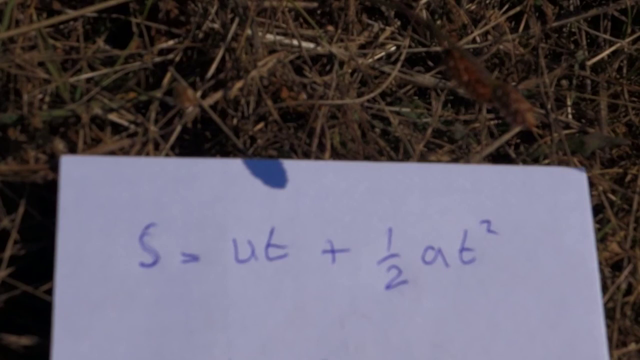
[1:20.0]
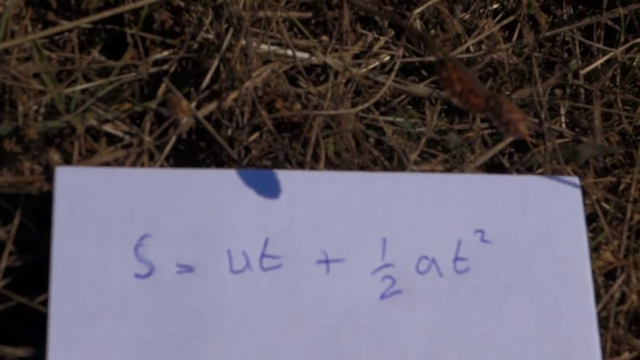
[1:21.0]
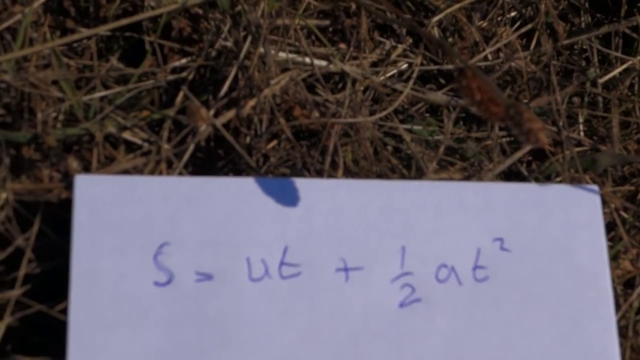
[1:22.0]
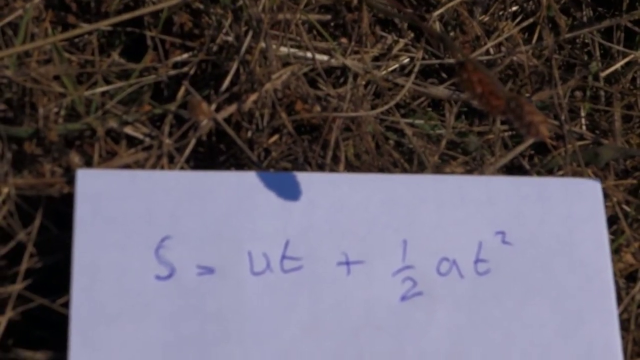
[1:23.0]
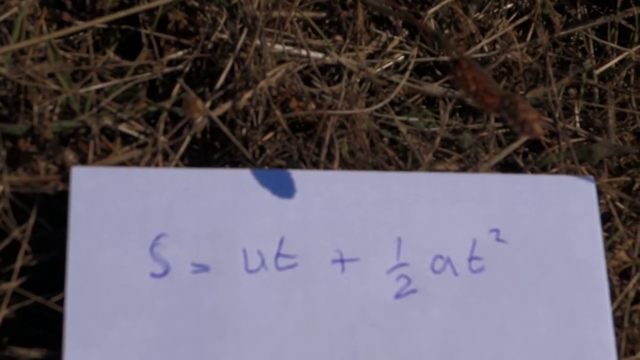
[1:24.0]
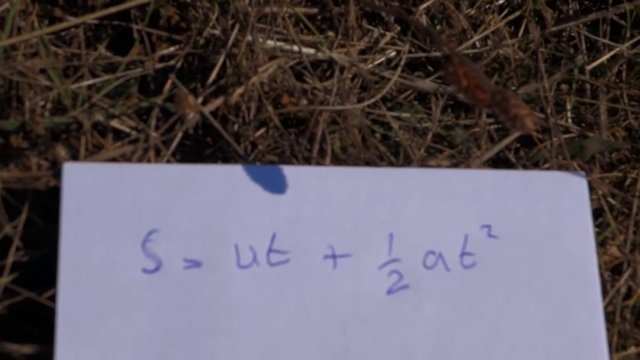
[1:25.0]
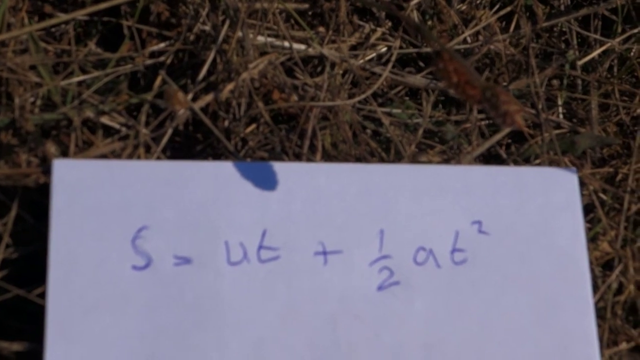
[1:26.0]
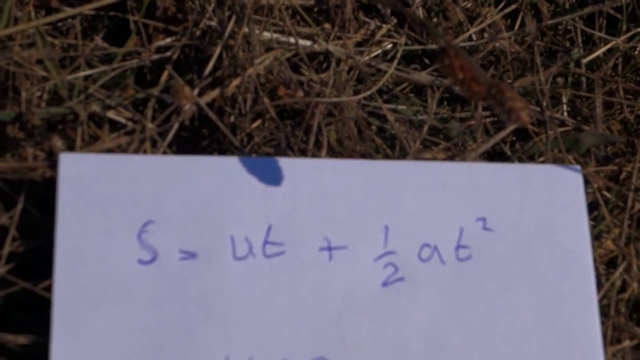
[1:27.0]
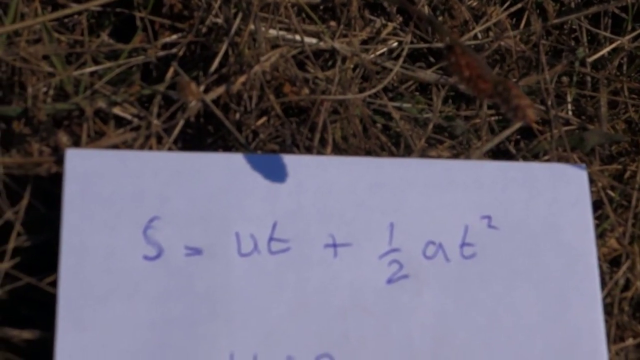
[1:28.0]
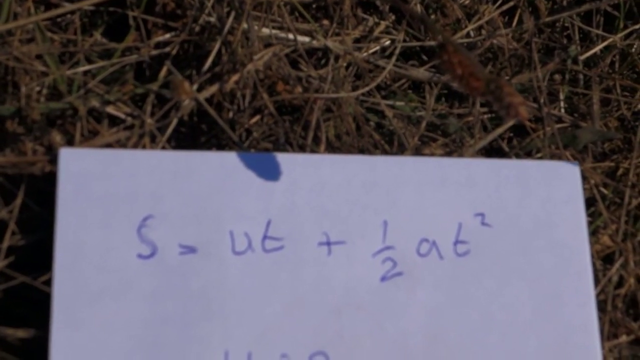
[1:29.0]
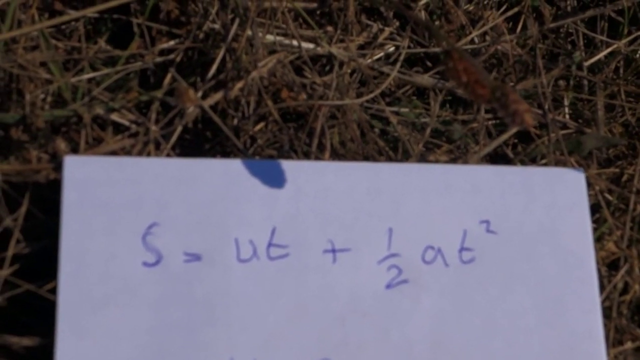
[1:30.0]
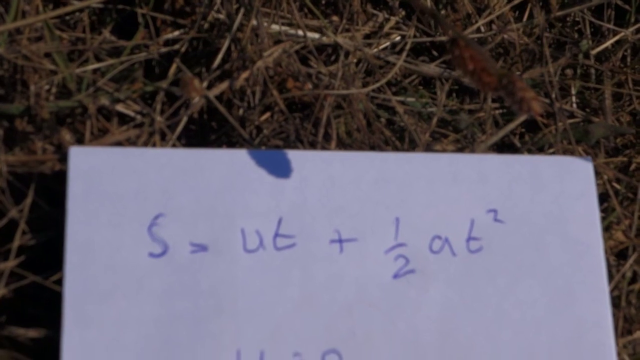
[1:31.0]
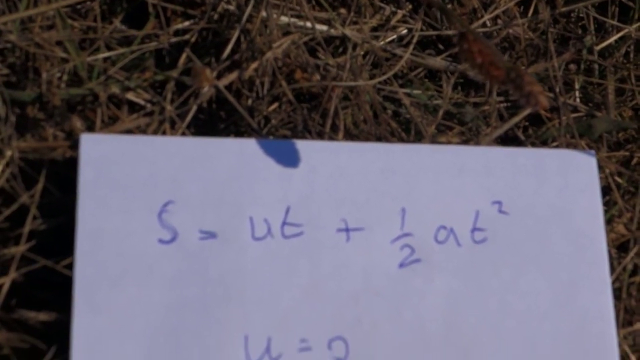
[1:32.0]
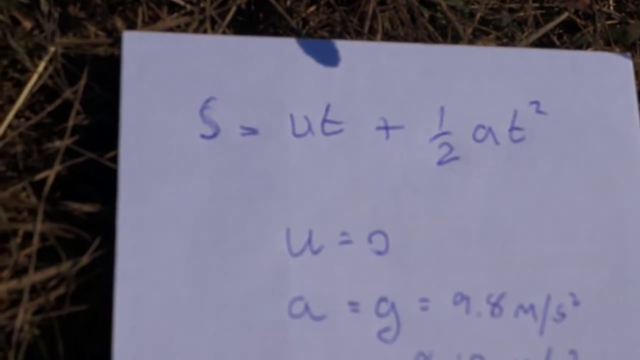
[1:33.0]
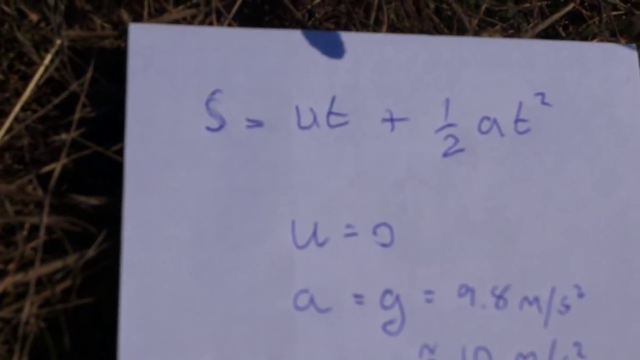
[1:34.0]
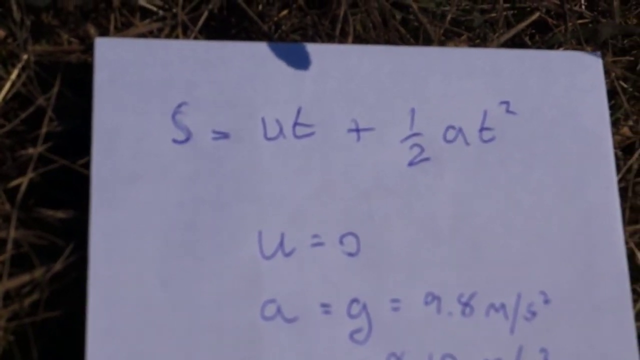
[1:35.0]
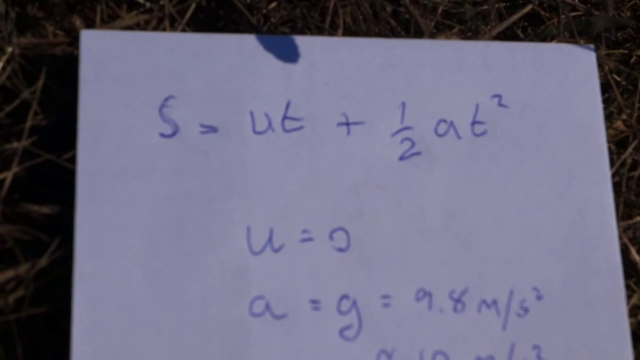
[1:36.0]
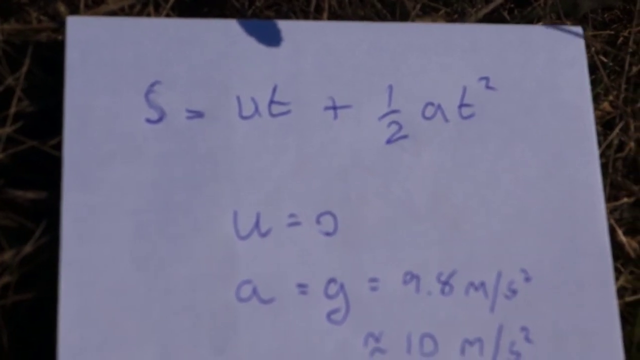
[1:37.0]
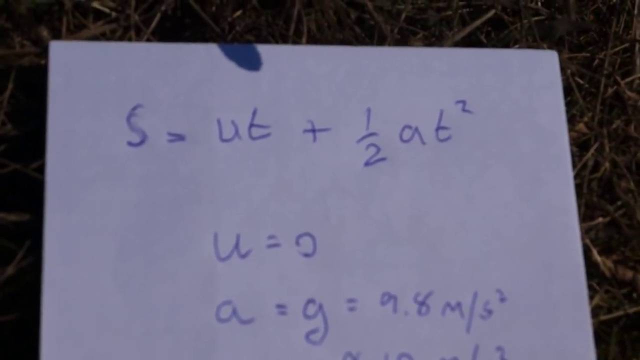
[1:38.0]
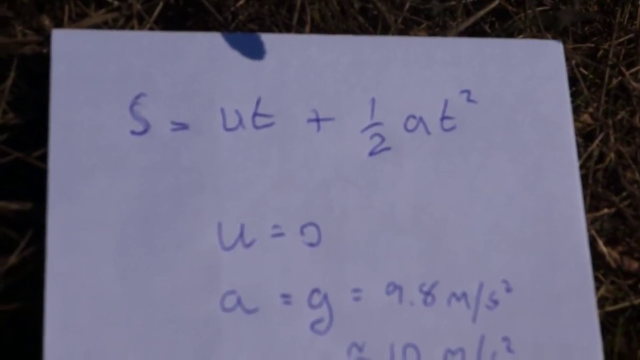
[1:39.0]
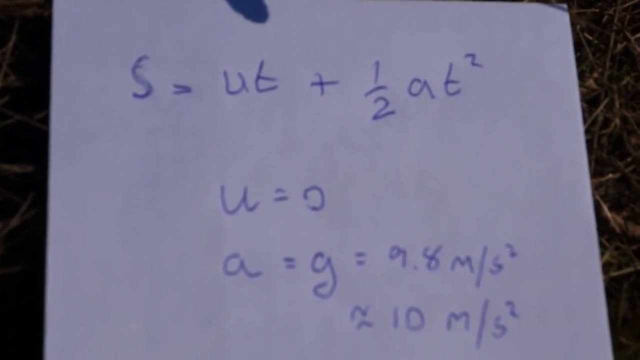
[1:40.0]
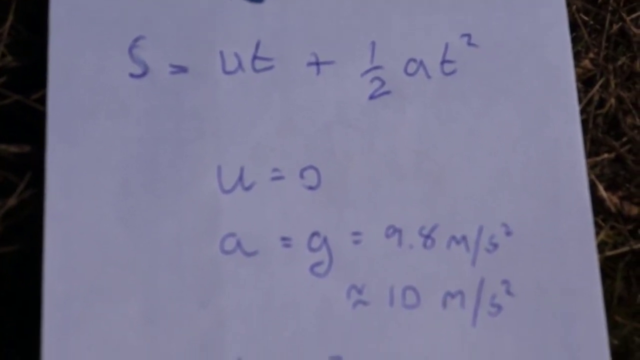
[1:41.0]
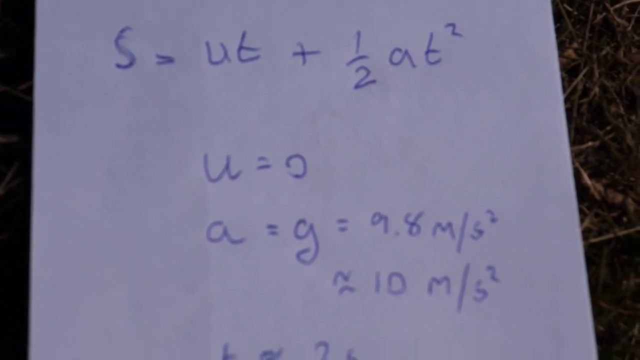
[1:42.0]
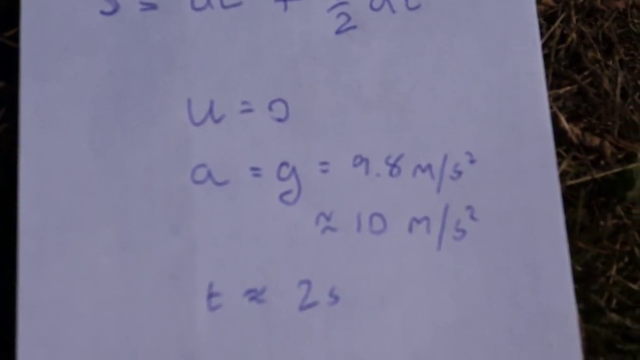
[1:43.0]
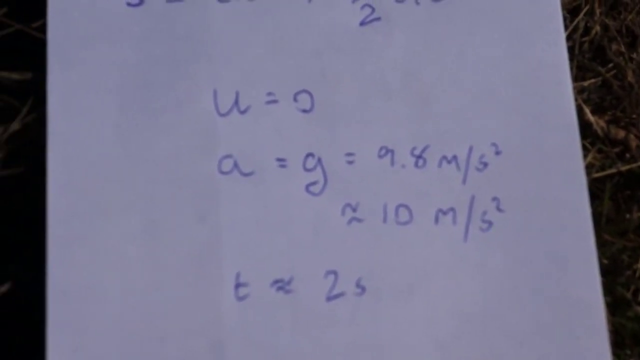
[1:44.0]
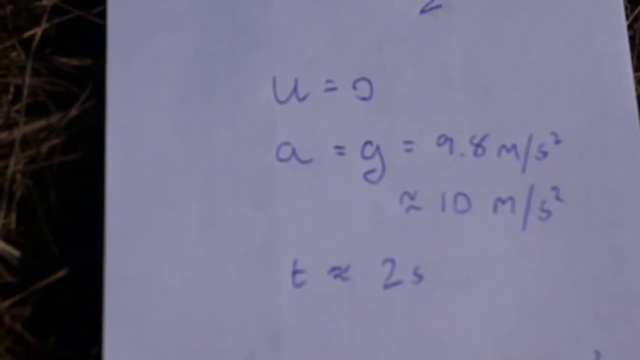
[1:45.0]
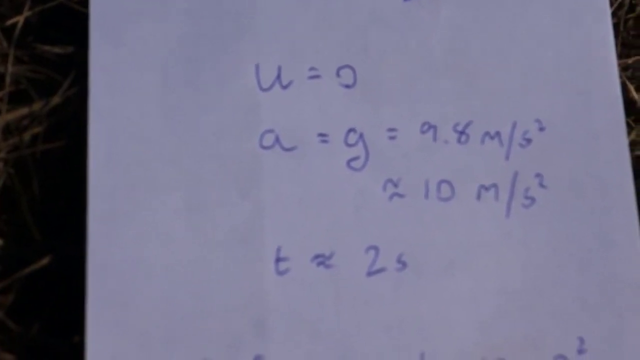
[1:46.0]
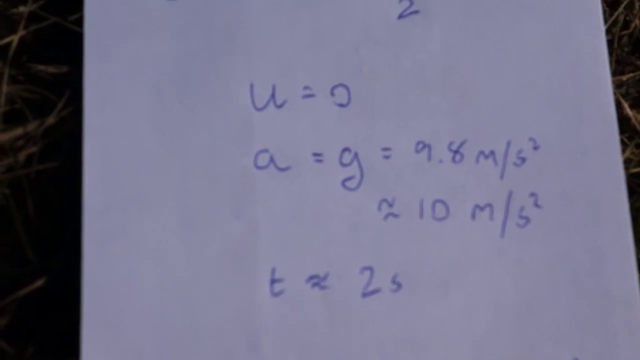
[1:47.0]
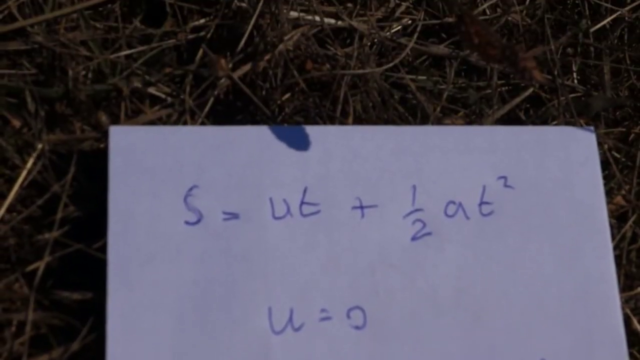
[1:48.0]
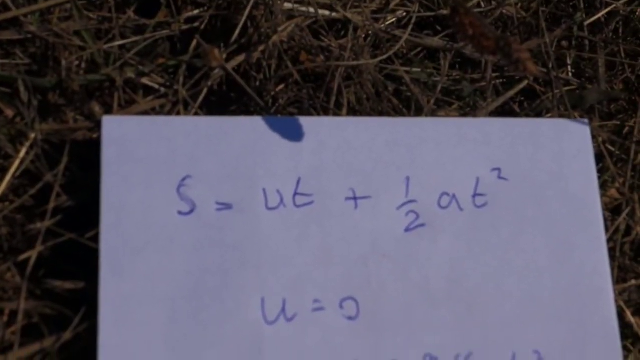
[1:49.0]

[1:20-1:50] A square white sheet of paper occupies the lower part of the screen, with mathematical formulas on it, most likely written in blue pen. The upper part of the screen shows dry grass lying on the ground in a disorderly way. The lighting is poor. The camera then frames the lower part of the sheet, which now fills almost the entire frame. As the camera moves down, more mathematical formulas in blue ink appear. For the rest of the shot the camera oscillates slightly, continuing to frame the same sheet. There are no other subjects besides the dry-grass background and the sheet with mathematical formulas.